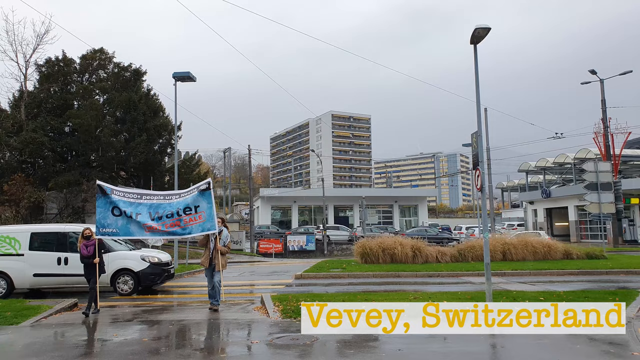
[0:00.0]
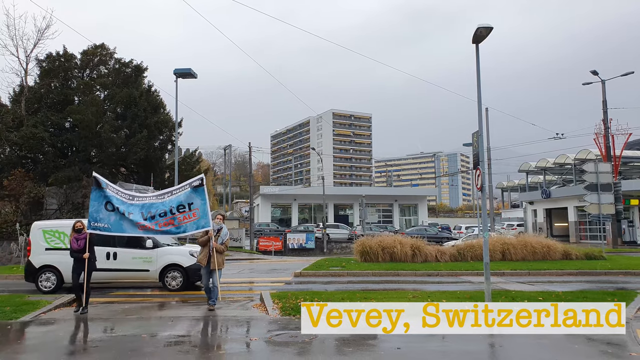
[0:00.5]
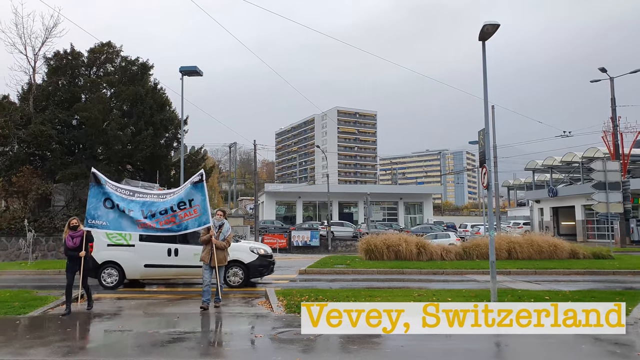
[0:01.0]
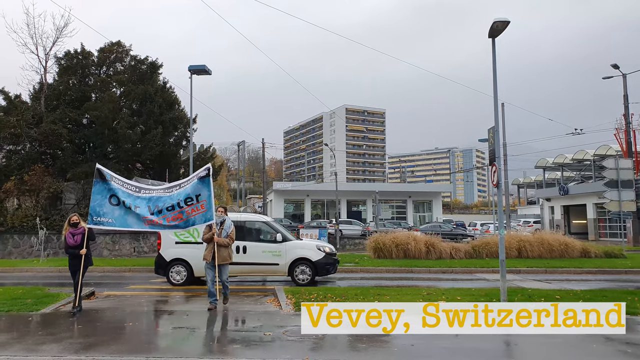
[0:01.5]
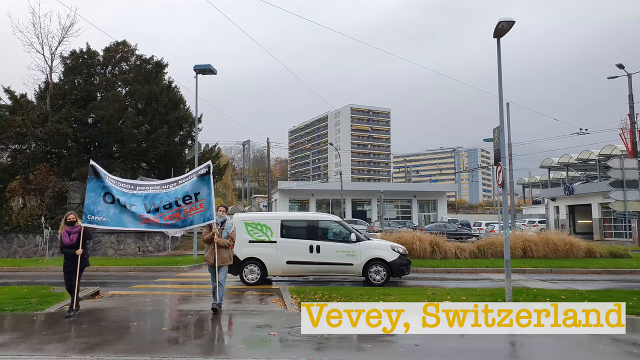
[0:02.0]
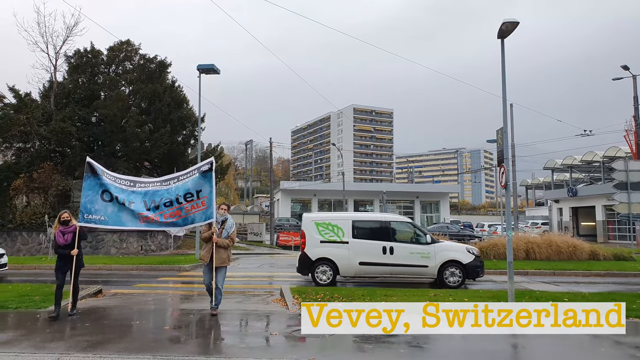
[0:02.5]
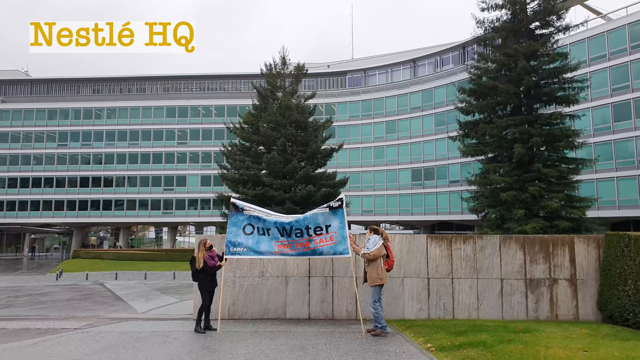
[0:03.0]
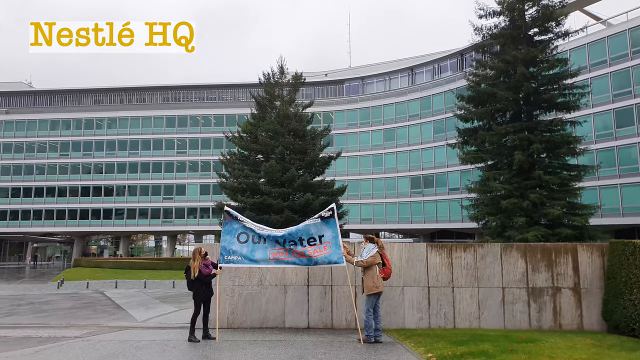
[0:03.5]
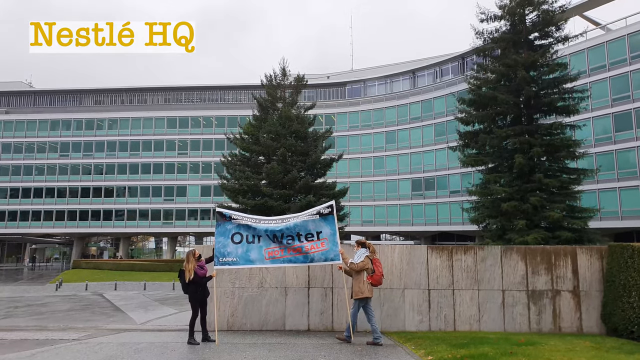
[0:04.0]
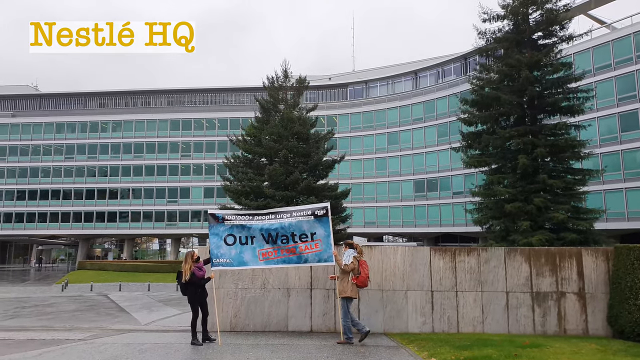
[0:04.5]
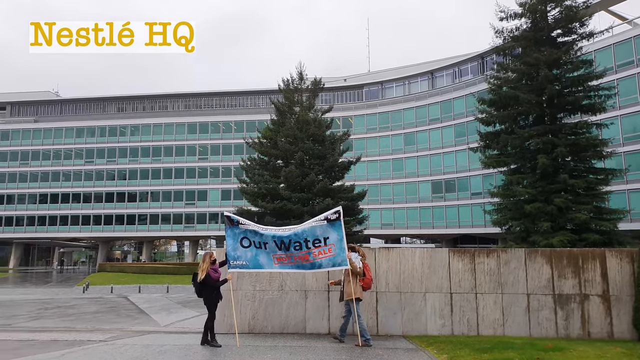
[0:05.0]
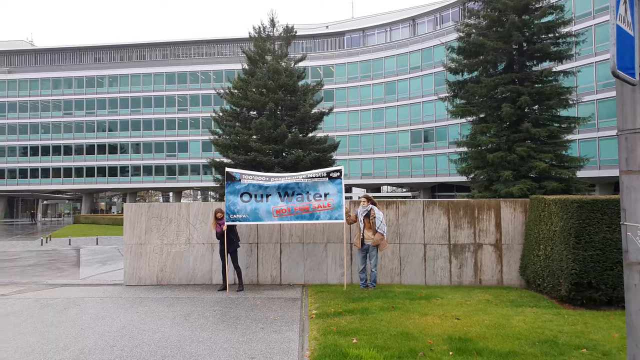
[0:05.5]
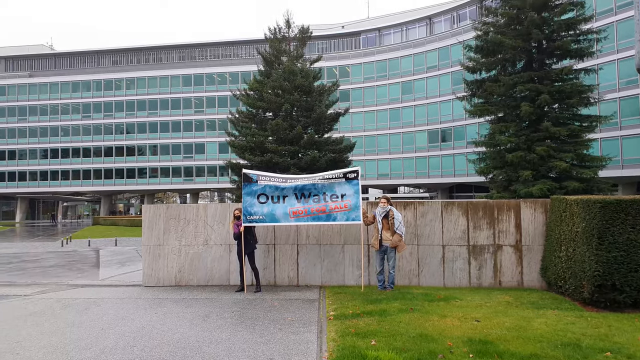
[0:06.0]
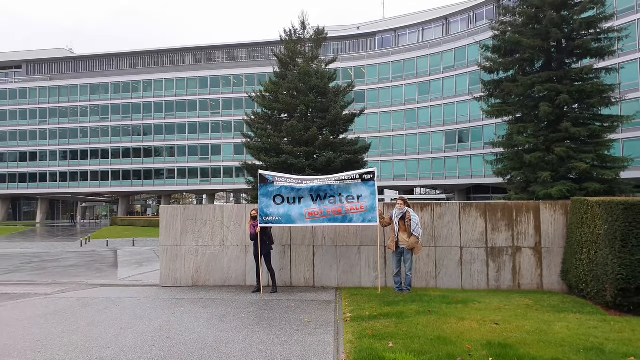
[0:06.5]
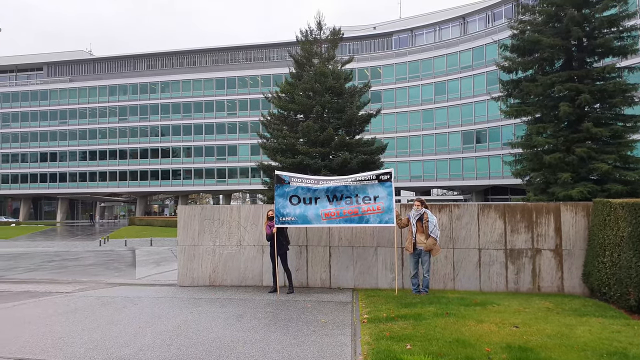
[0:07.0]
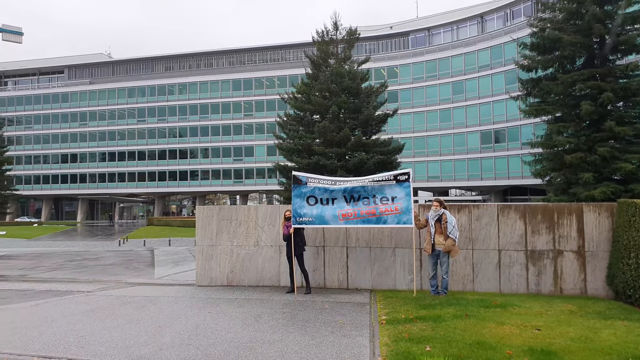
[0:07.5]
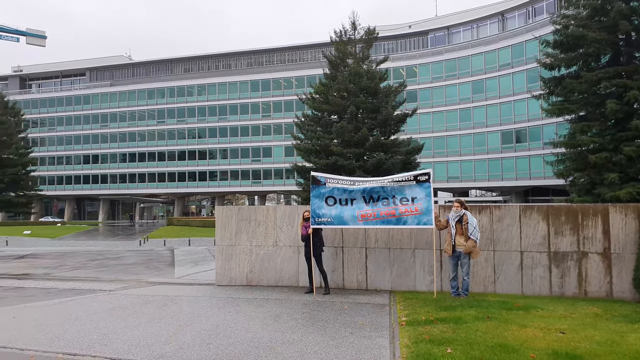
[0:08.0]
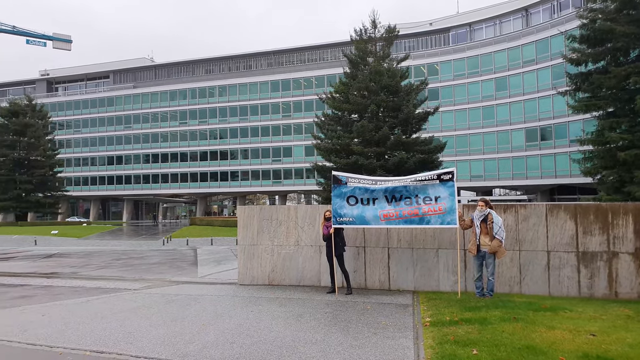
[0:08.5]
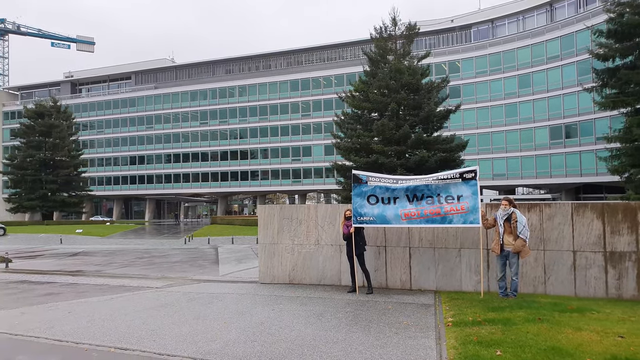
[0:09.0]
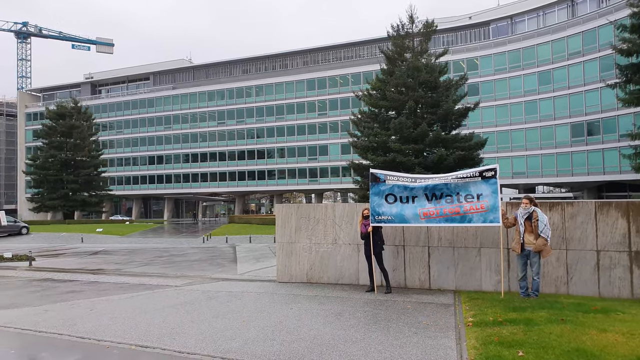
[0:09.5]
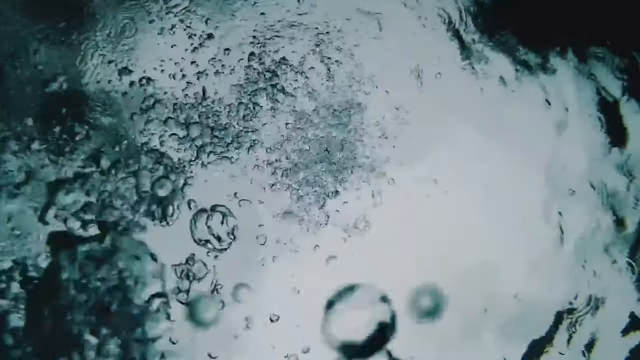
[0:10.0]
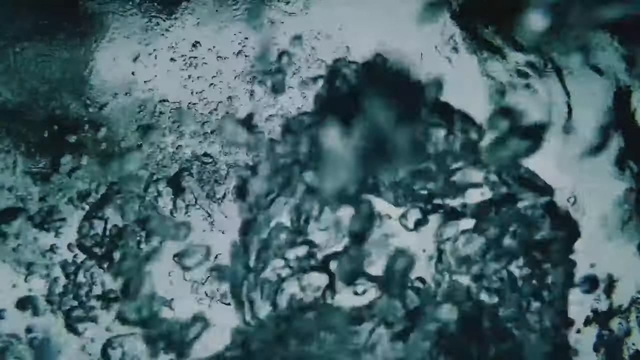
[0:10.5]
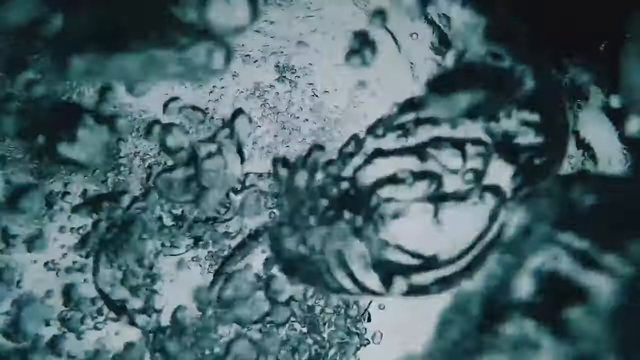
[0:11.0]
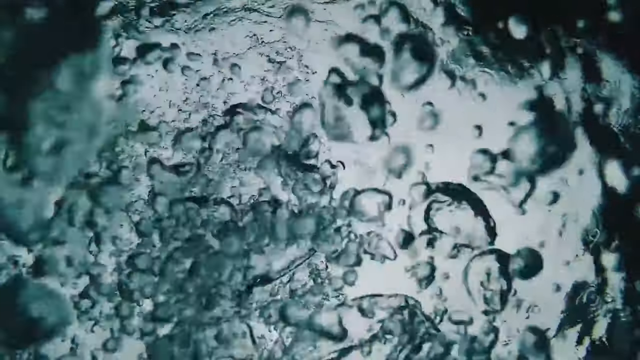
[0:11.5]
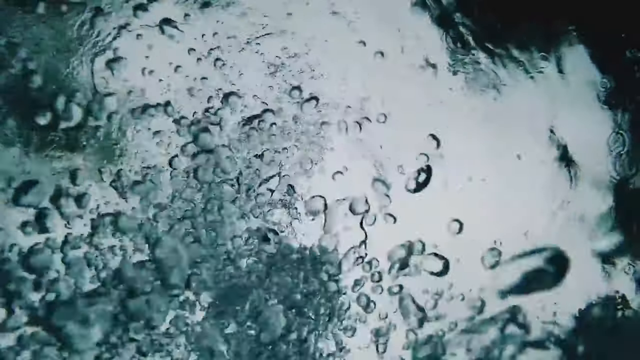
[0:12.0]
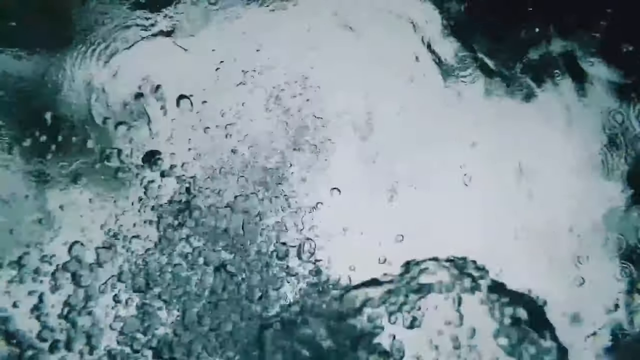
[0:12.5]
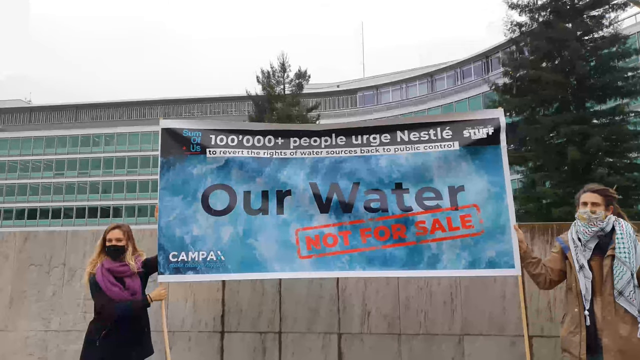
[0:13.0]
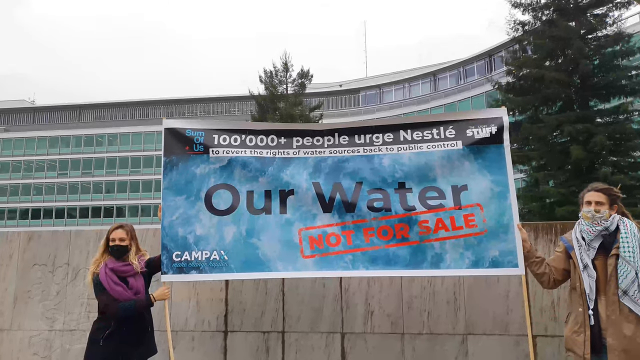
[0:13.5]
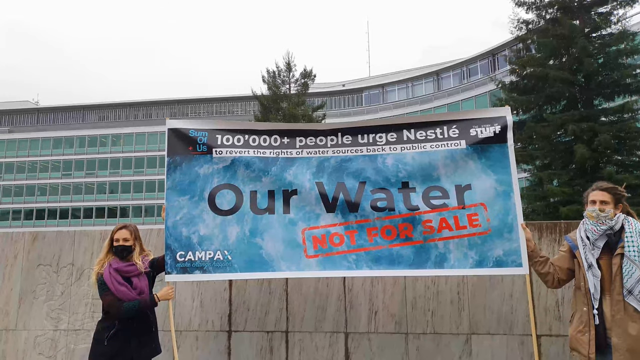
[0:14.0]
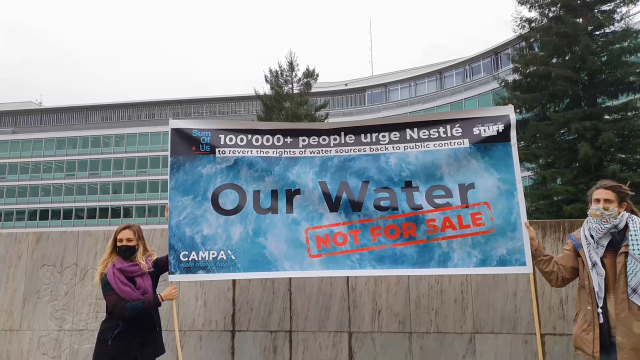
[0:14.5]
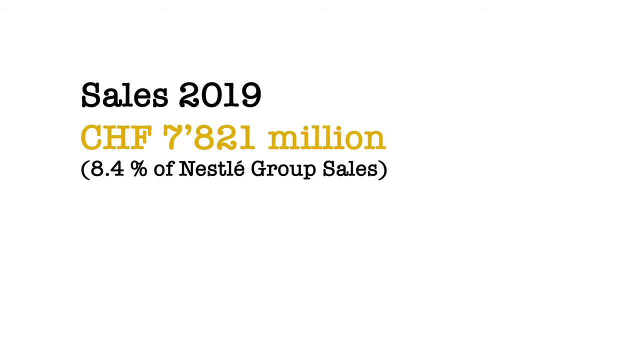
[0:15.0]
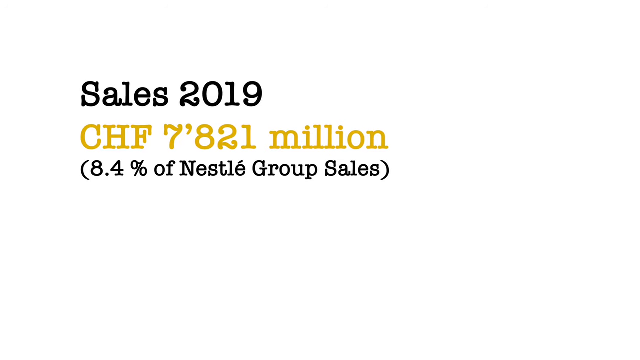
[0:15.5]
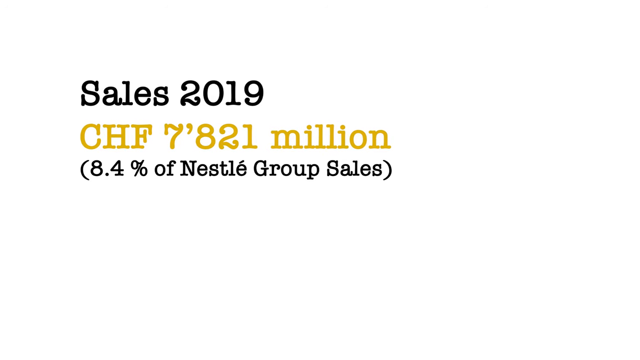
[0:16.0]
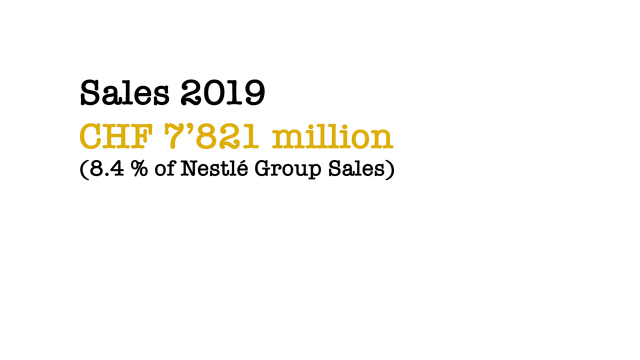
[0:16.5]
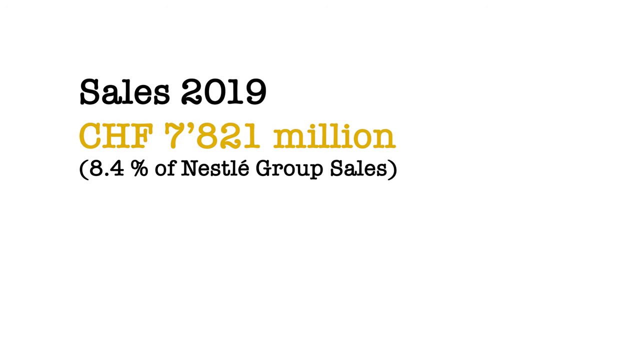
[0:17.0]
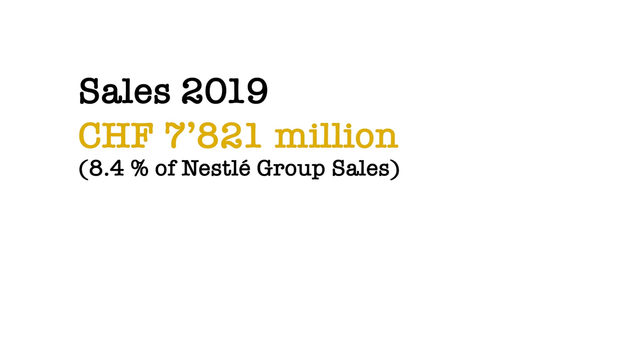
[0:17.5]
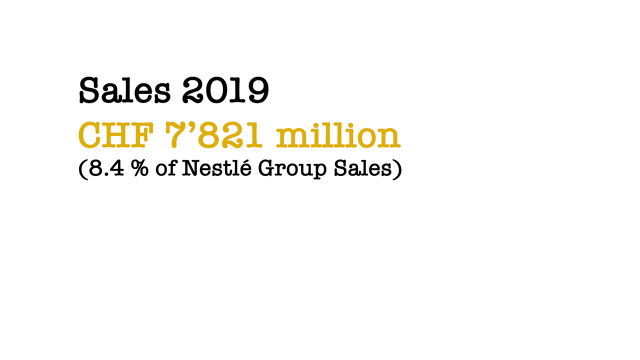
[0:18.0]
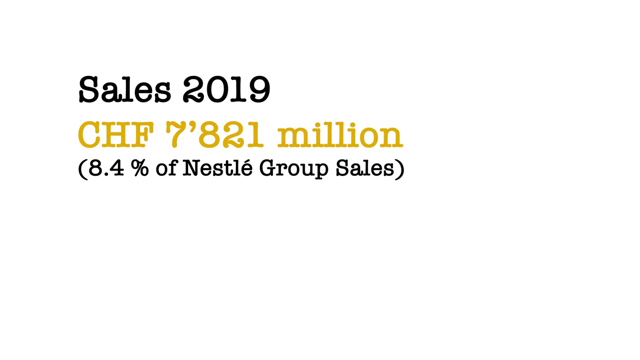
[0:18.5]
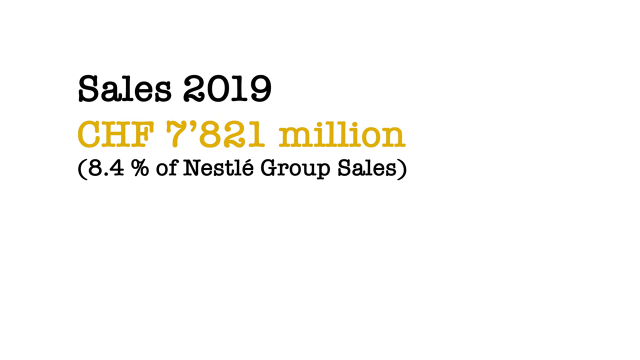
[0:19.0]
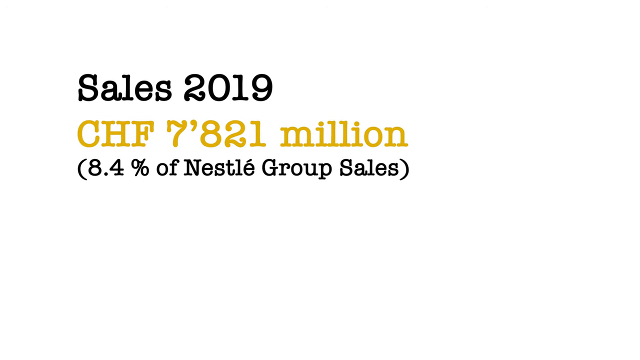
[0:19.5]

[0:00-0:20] The video is set out in a city in Switzerland, with a couple of buildings in the distance and cars parked. In the very front, two girls hold up a sign reading "our water not for sale," with text that includes "100,000 plus people urge" and identifies "the Nestle headquarters." They move the sign in front of a giant building. The scene then changes to lots of water bubbles and returns to the sign, with text about sales in 2019 of over 7 million, "8.4% of the Nestle group sales." Last, a person stands holding up what appears to be the plastic outside covering of a bottle, which seems to say "pure water" or something similar.